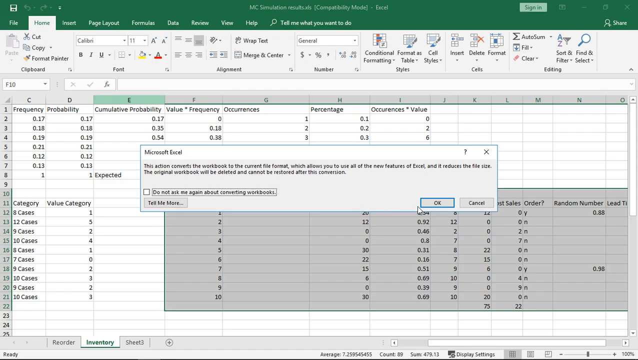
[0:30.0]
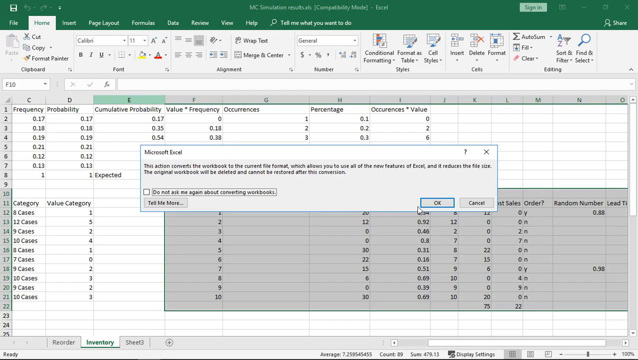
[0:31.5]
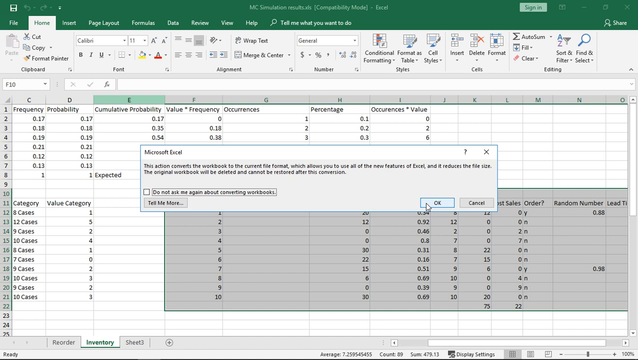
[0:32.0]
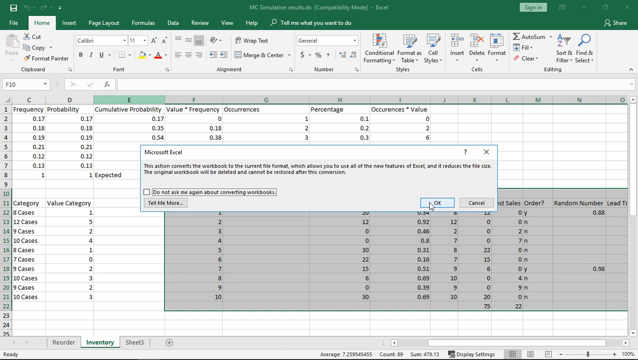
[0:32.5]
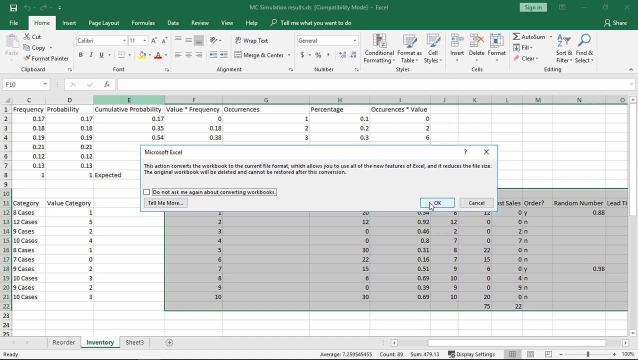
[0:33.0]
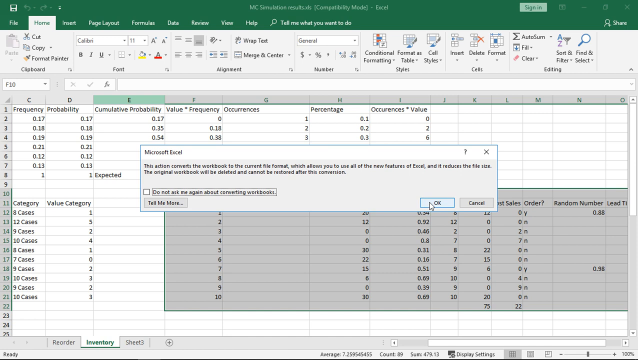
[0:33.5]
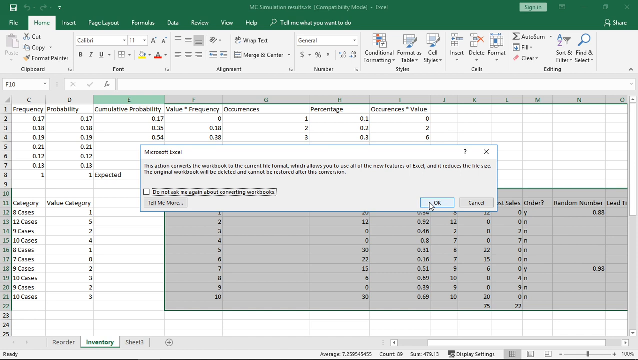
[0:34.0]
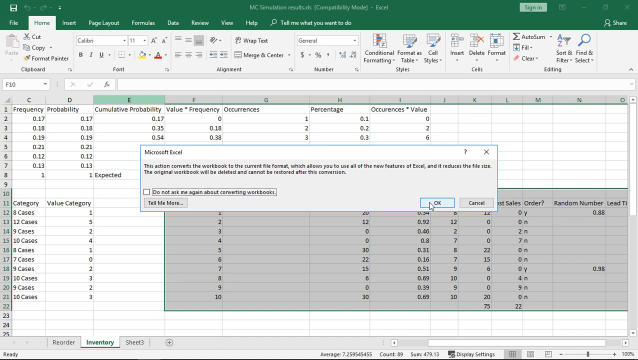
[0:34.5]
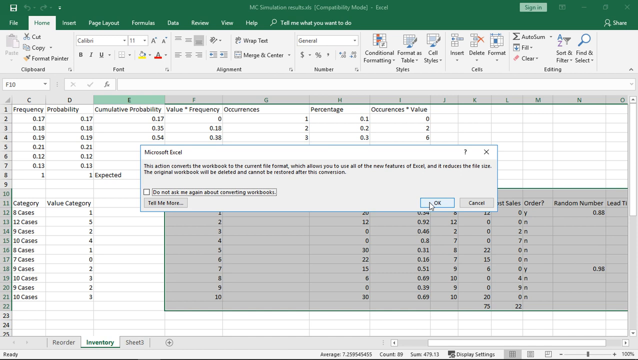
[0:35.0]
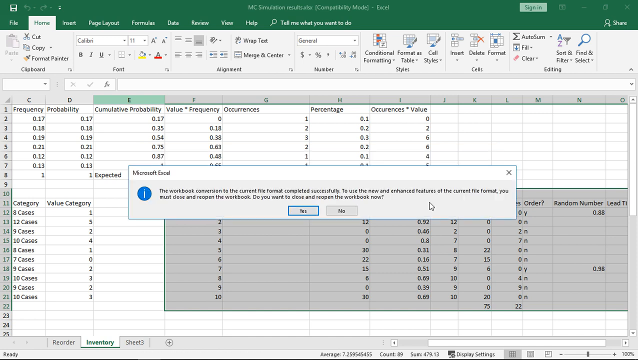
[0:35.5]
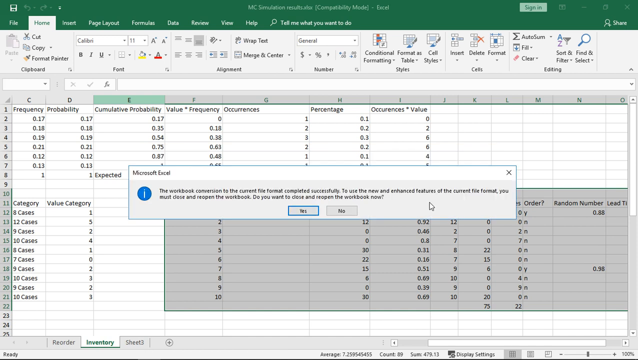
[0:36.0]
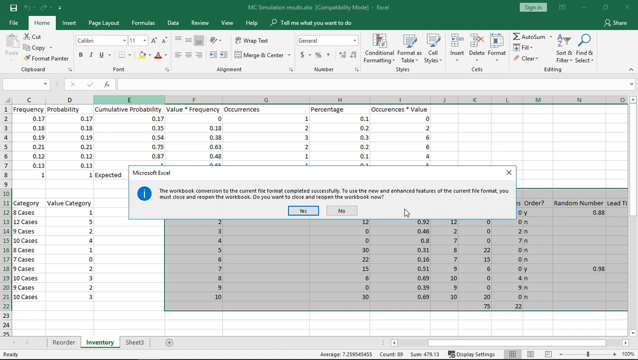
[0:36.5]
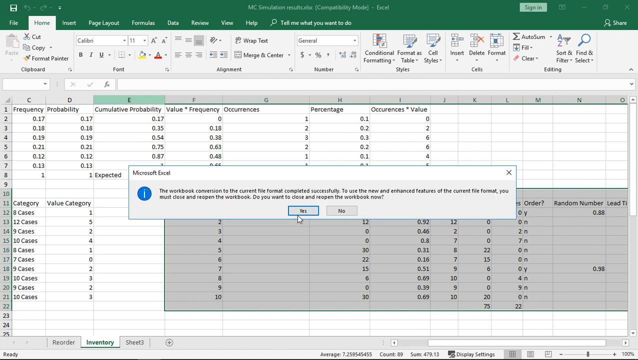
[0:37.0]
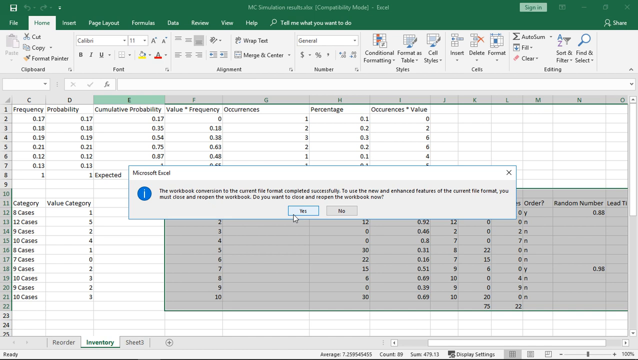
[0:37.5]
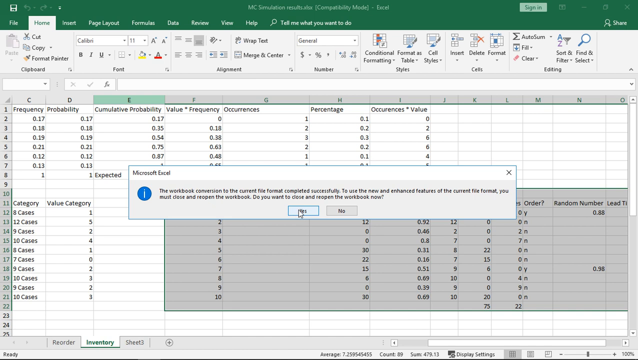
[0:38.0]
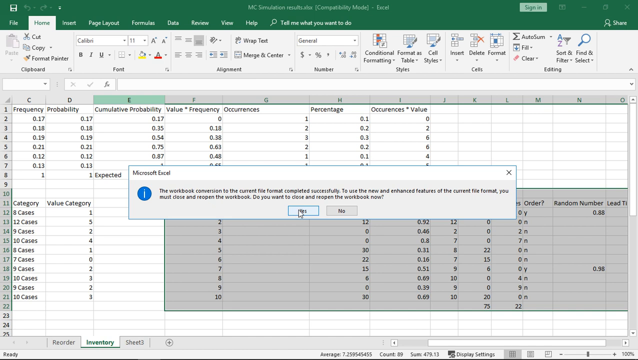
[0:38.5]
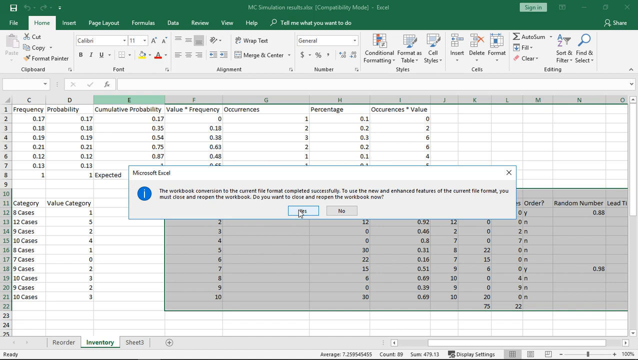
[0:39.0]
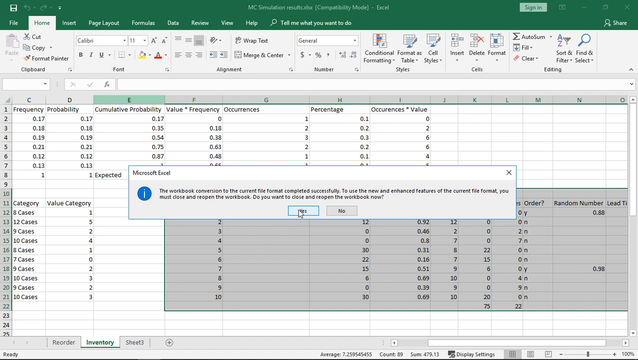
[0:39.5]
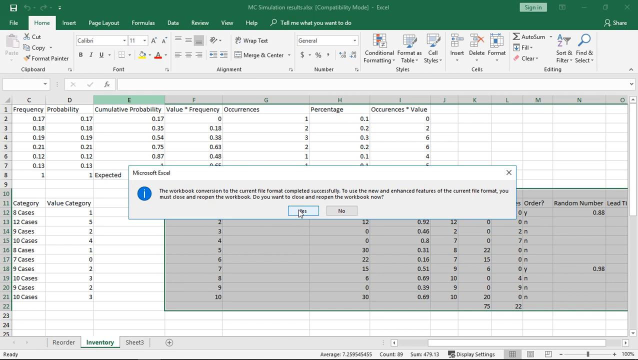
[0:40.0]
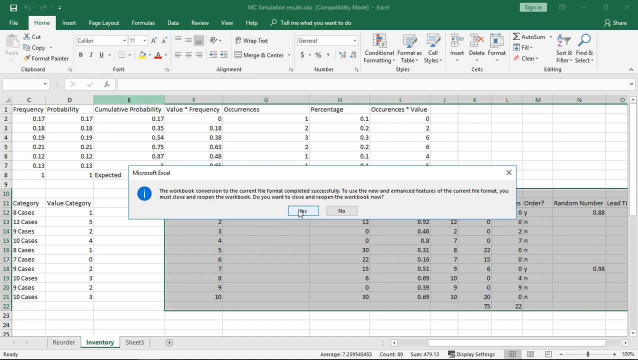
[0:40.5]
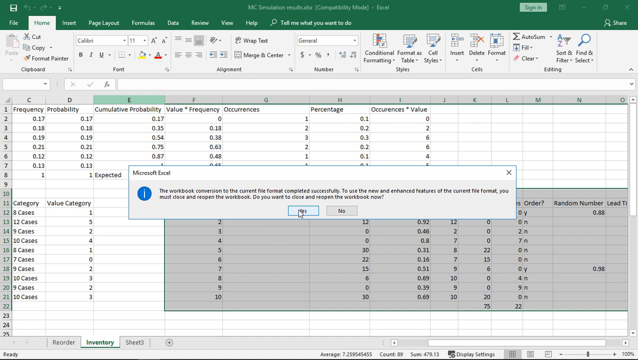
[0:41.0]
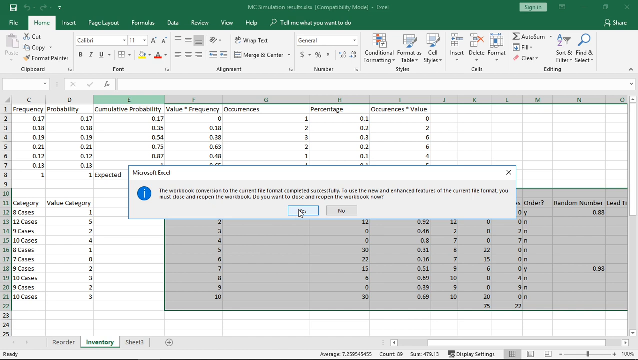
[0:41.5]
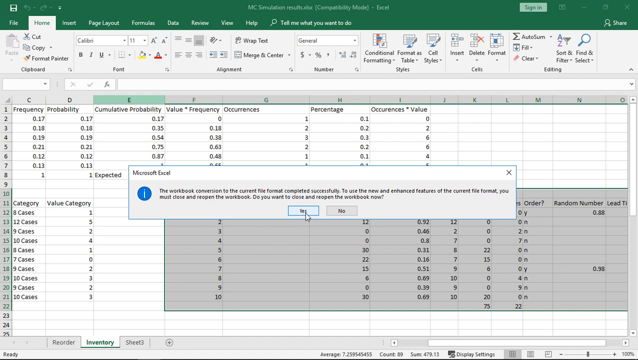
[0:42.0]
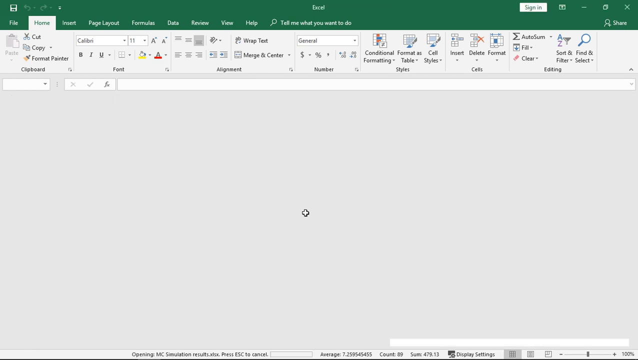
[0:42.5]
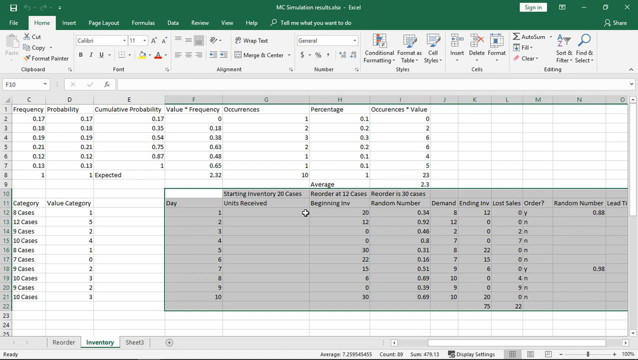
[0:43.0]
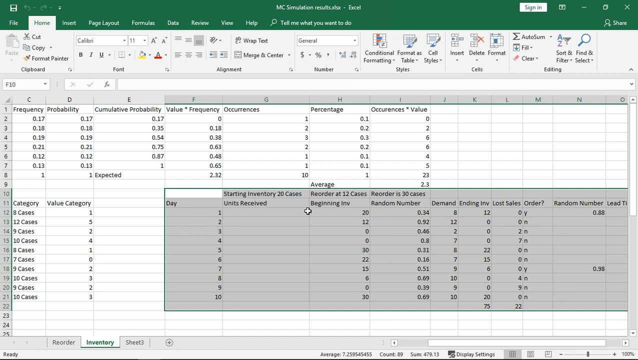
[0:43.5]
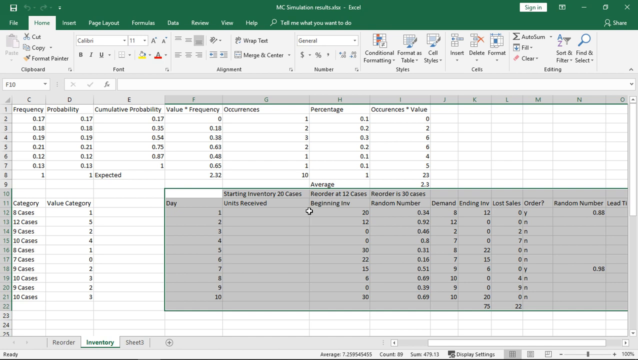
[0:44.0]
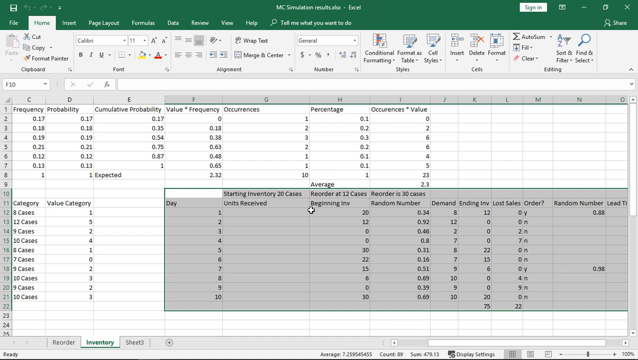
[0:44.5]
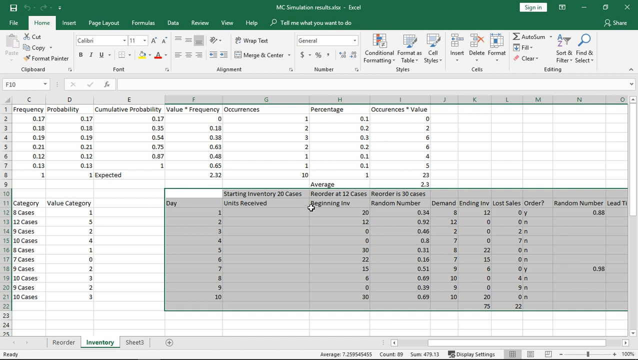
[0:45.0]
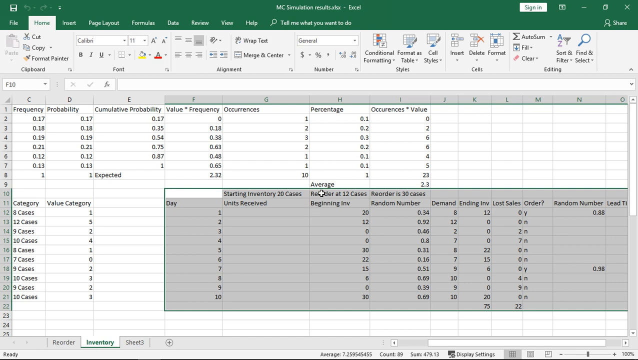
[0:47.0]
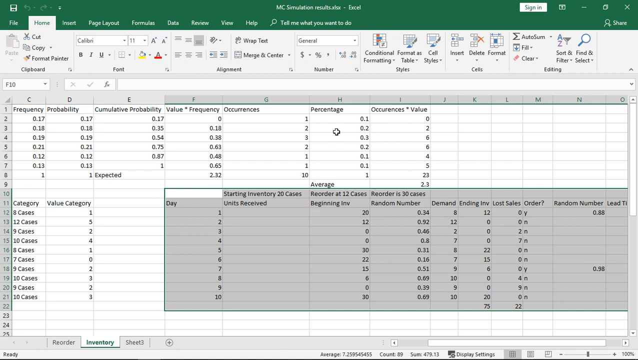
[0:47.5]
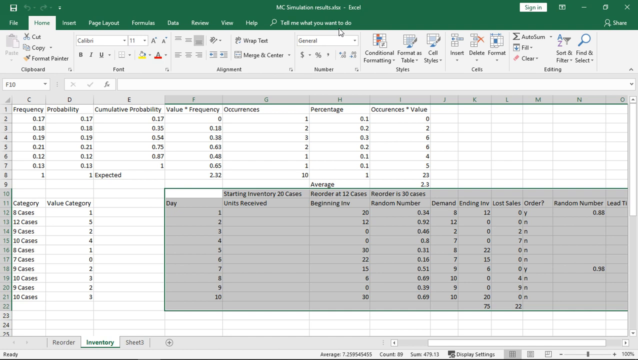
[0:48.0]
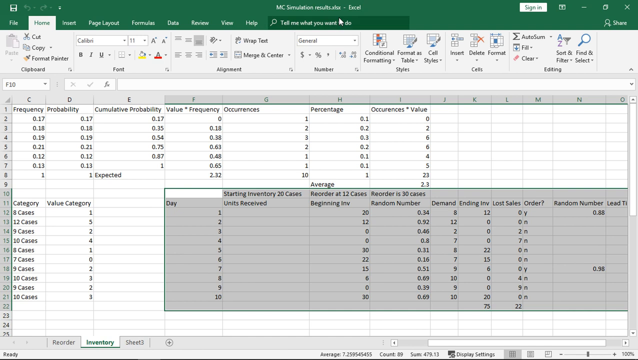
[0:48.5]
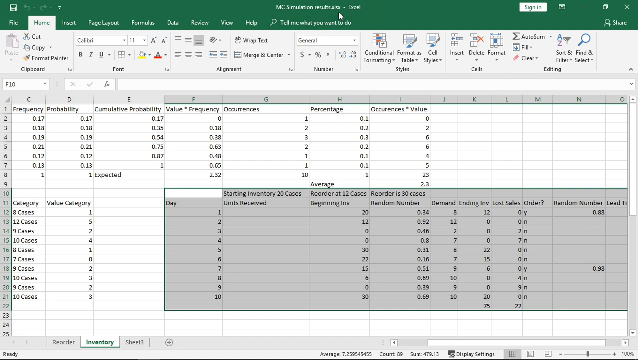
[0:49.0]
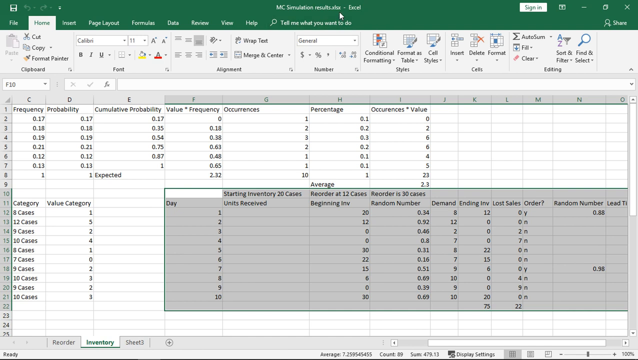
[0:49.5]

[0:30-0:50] OK is pressed, and another Microsoft Excel message appears about the worksheet and the current file format. The selected option is yes. Some gray shading remains on the sheet. The cursor moves to the top middle to press something, and a Microsoft message appears that says "this action converts", with the options "do not ask me again about converting workbooks" and "tell me more". OK is pressed. The message keeps popping up until the small box with a cross is pressed.